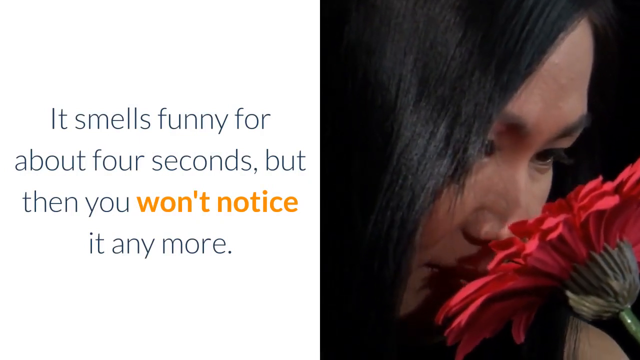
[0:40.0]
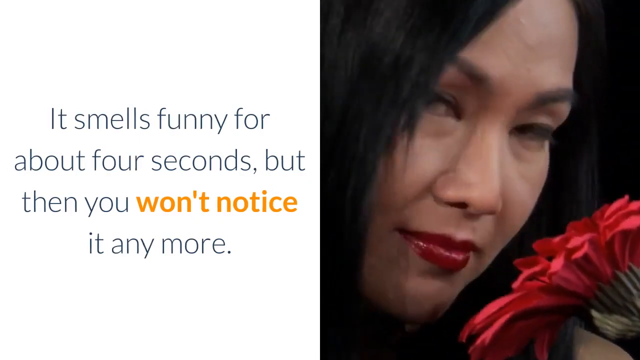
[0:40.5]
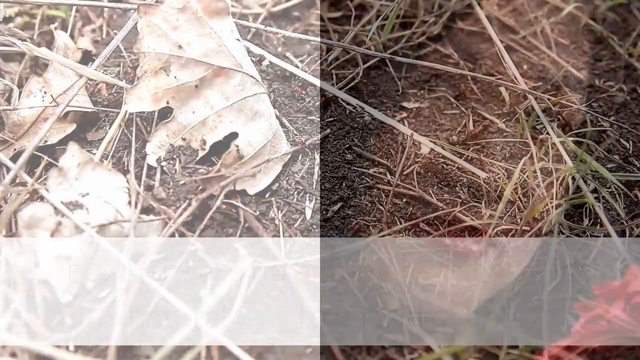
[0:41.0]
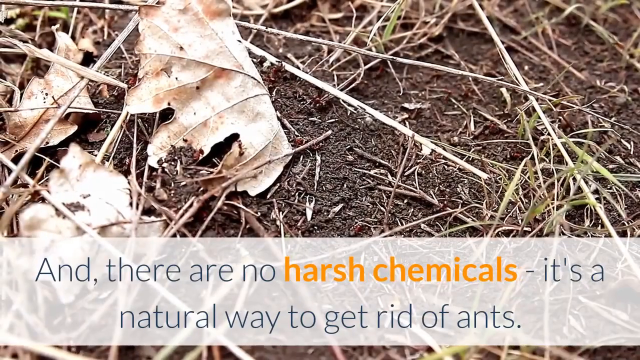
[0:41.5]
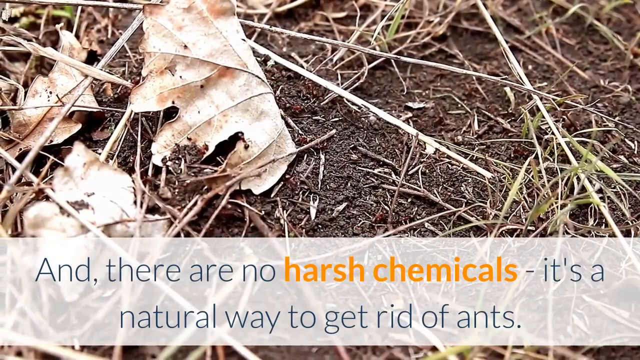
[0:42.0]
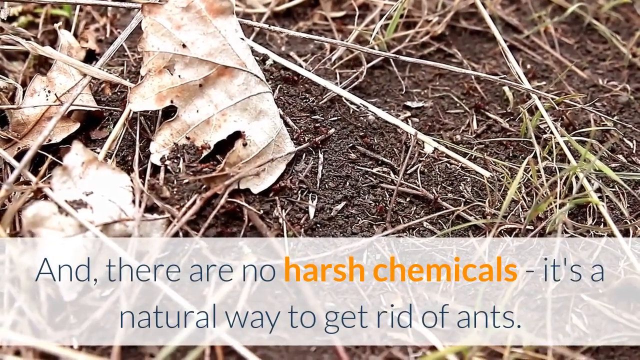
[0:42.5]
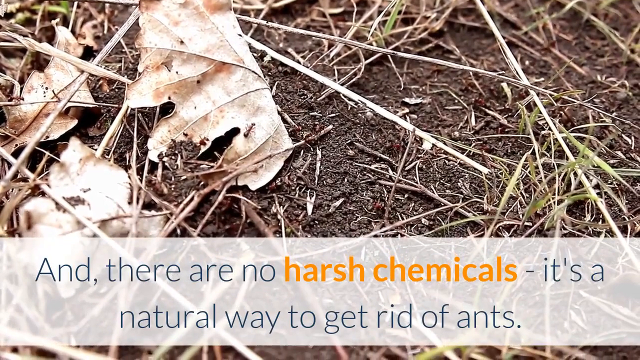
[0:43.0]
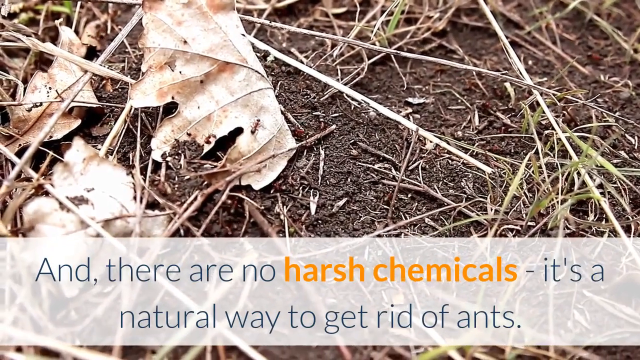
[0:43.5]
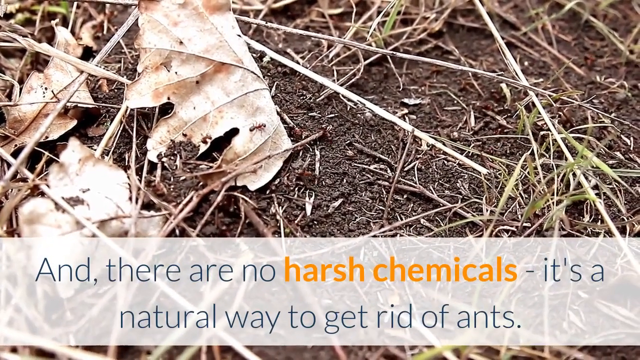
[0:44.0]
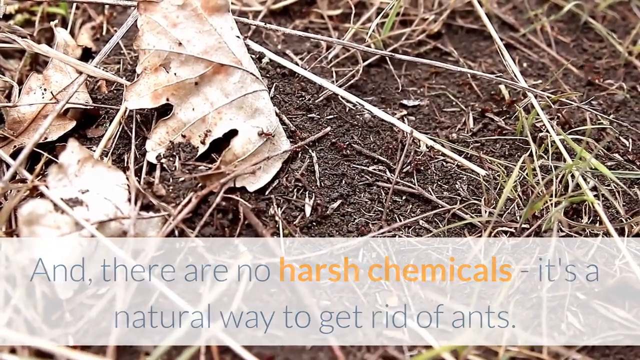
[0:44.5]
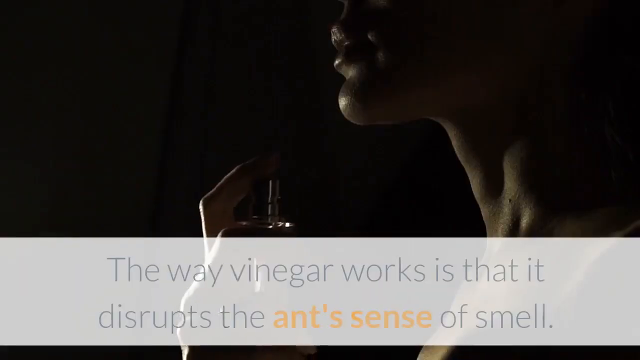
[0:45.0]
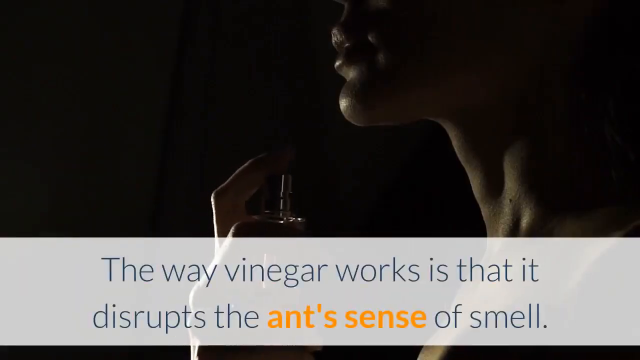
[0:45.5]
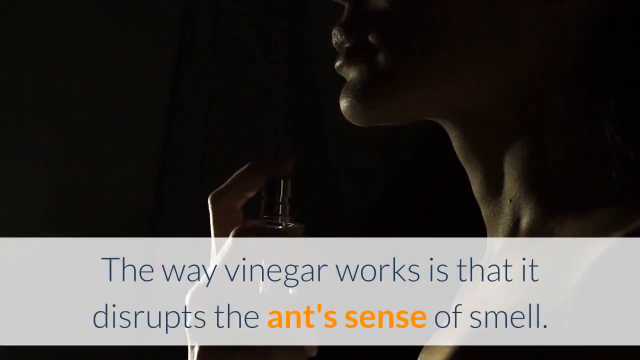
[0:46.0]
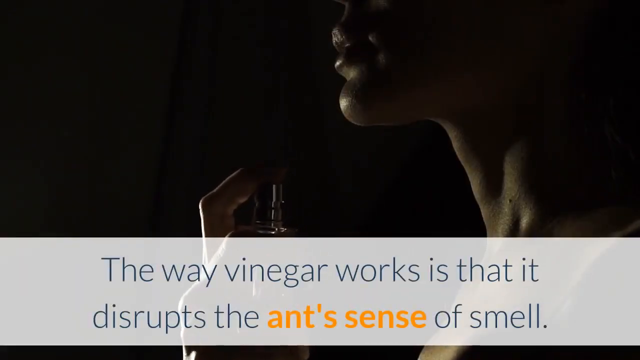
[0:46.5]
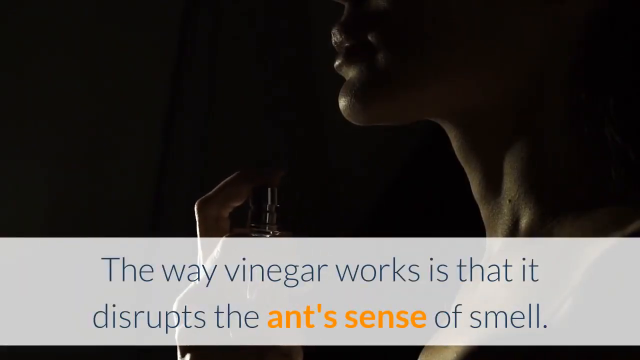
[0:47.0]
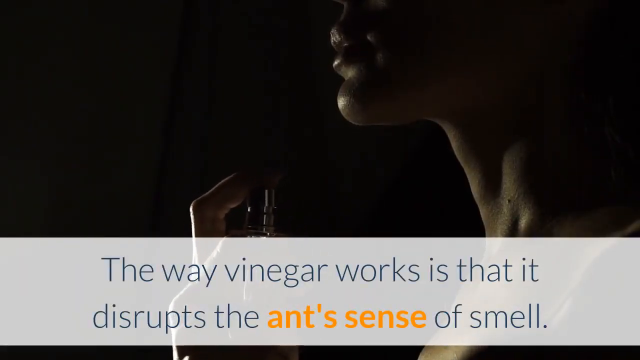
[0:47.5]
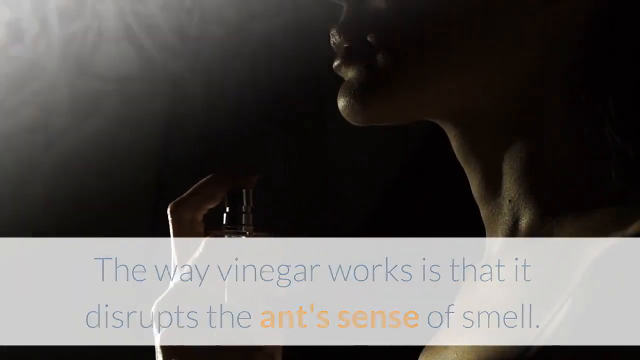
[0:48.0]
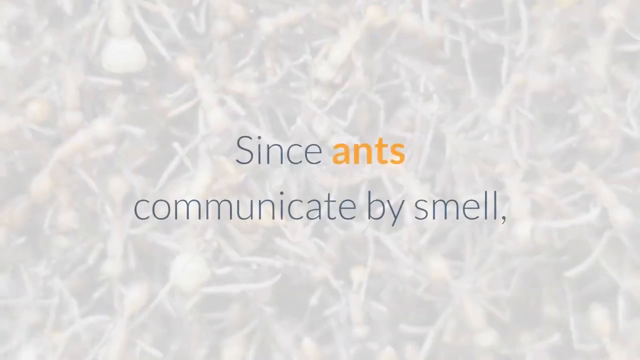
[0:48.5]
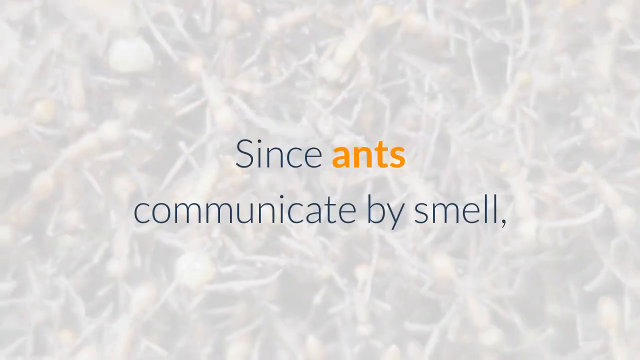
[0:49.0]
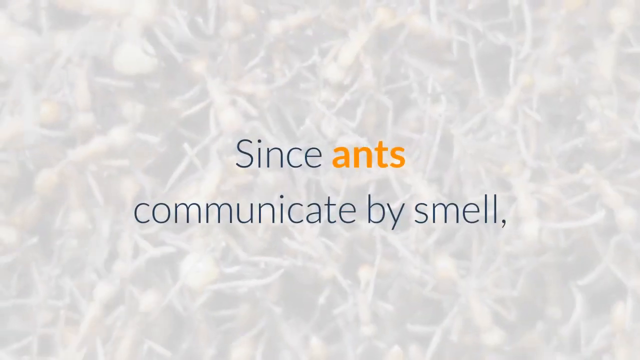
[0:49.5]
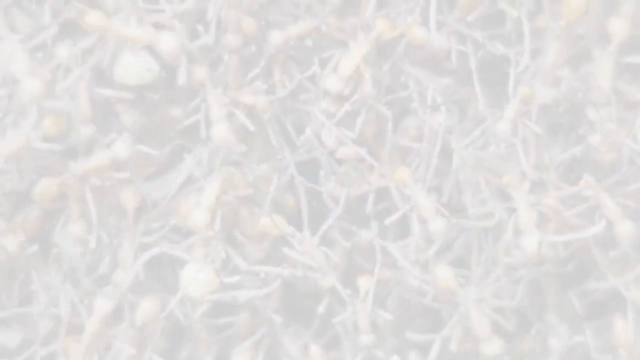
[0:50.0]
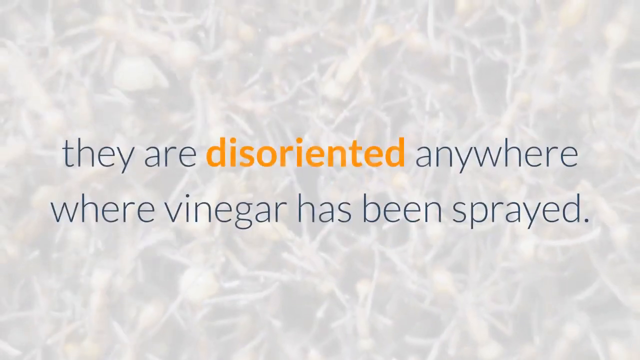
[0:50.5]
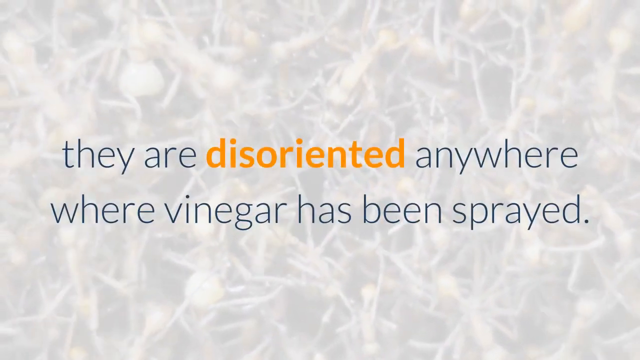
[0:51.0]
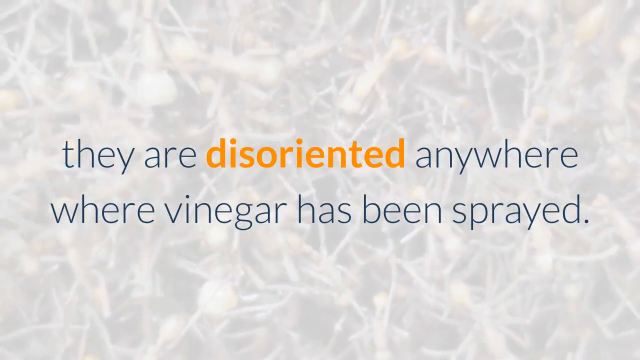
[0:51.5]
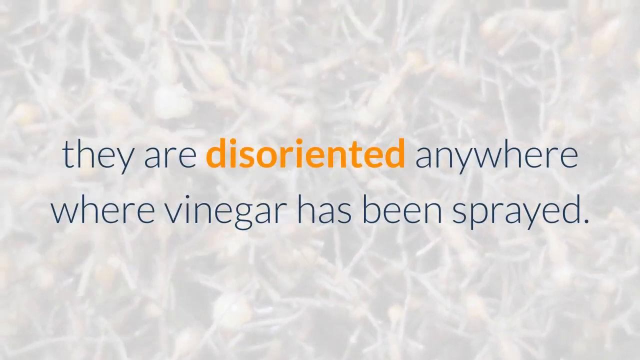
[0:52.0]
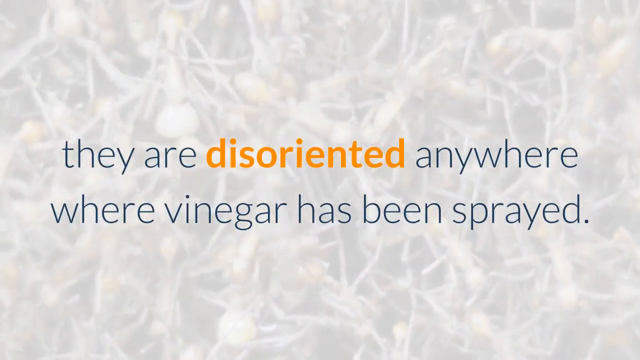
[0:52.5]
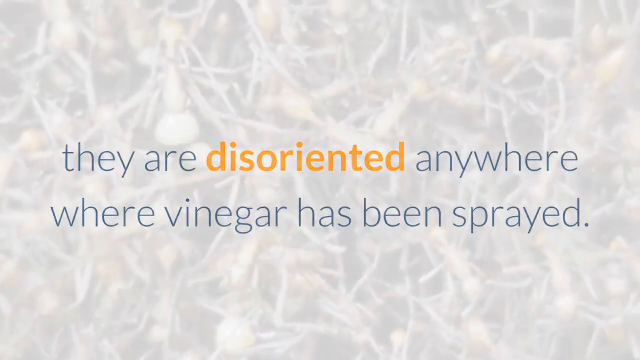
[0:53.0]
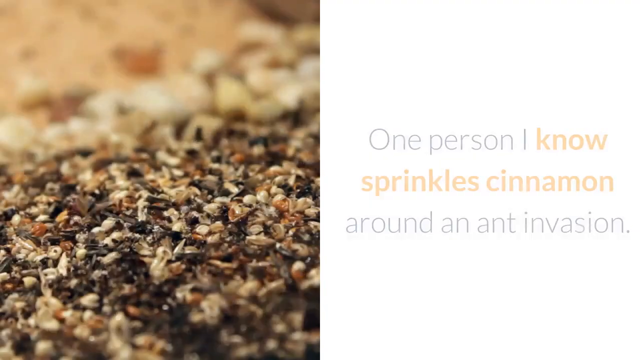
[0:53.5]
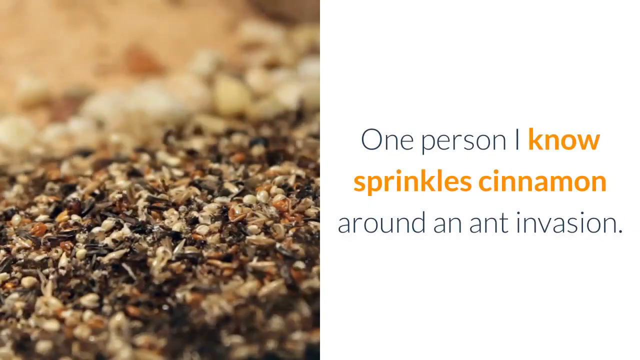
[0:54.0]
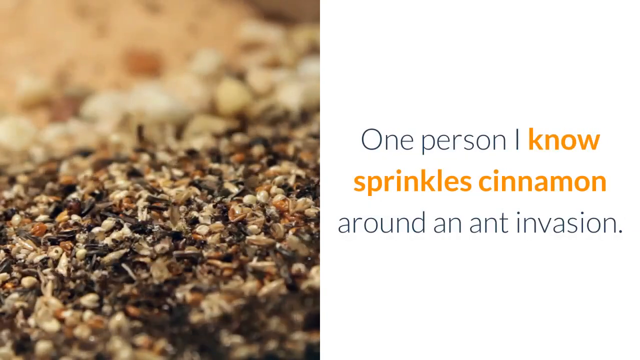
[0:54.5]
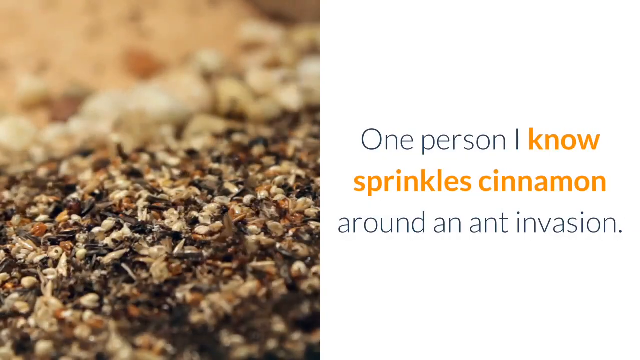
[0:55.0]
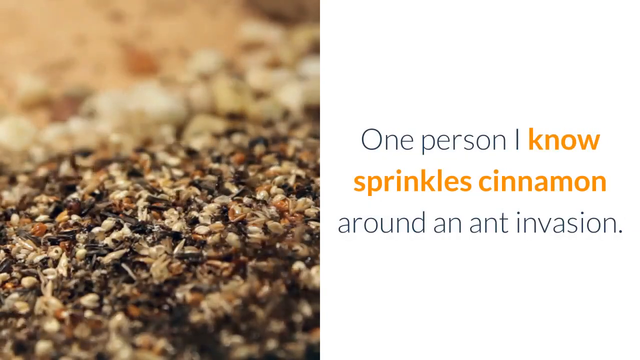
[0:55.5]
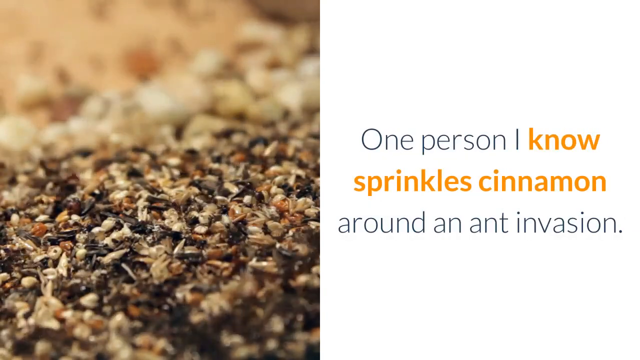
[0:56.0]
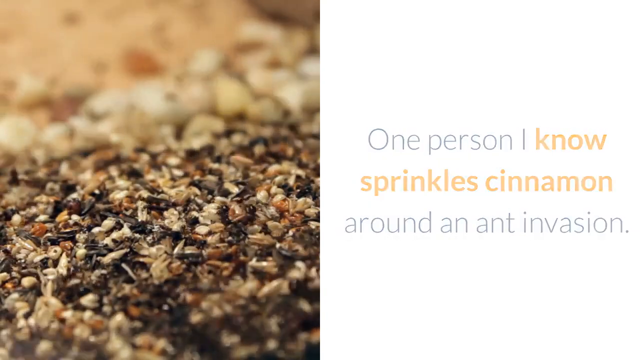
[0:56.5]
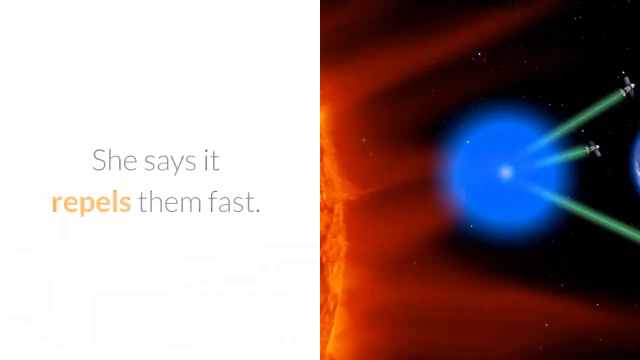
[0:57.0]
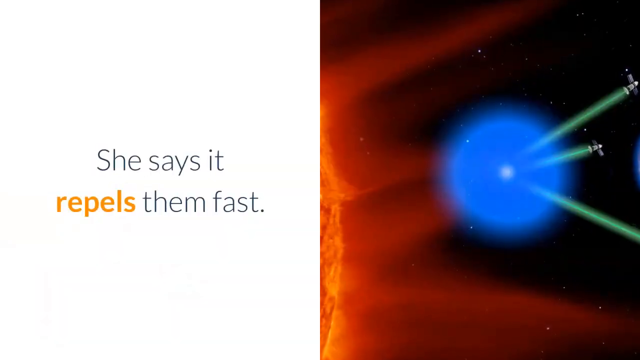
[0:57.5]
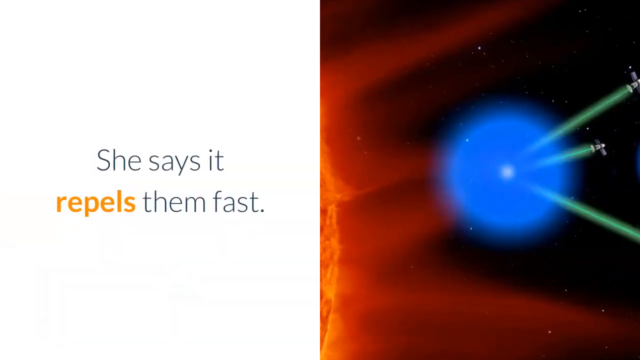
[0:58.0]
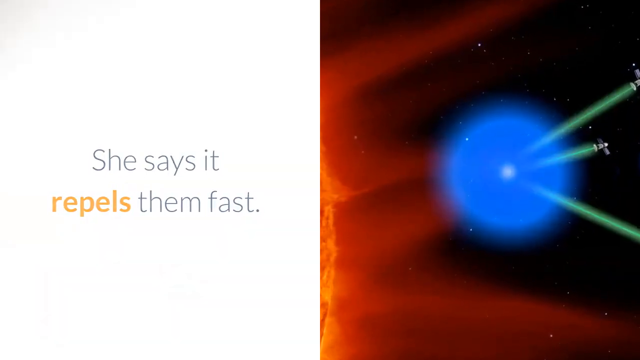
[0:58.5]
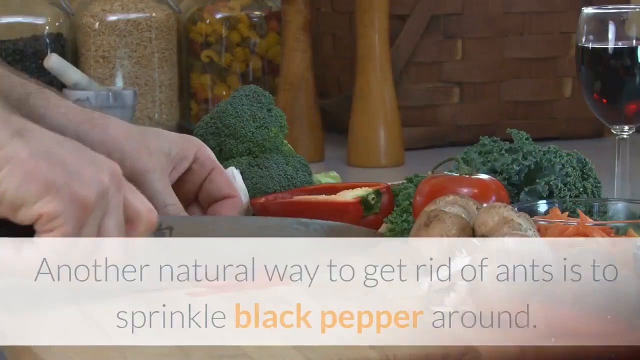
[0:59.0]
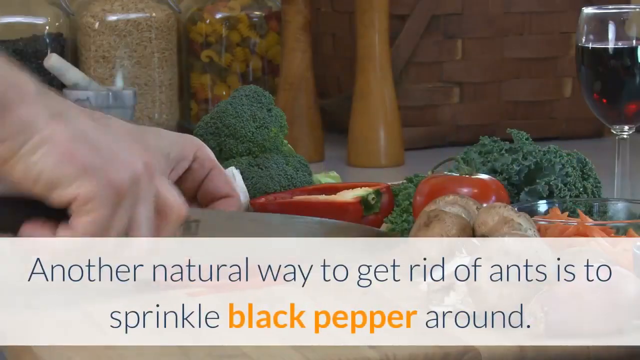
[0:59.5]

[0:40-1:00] On the left, black text on a white background reads "it smells funny for about four seconds. Then you won't notice it anymore," with "you won't notice" in bold orange. On the right, someone sniffs a big red flower. In the next scene, shot close to the ground, there are leaves, grass and dirt, with ants crawling around at the bottom. Text reads "and there are no harsh chemicals, it's a natural way to get rid of ants," with "harsh chemicals" bolded in orange. After the ants crawl around for a little while, a new scene shows a dark room where someone sprays perfume on themselves, with a close-up of their neck and the spray. Text reads "the way vinegar works is that it disrupts the ants' sense of smell." Another scene follows with text reading "since ants communicate by smell, they're disoriented anywhere where vinegar has been sprayed. One person I know sprinkles cinnamon around an ant invasion. She says it repels them fast. Another natural way to get rid of ants is..."